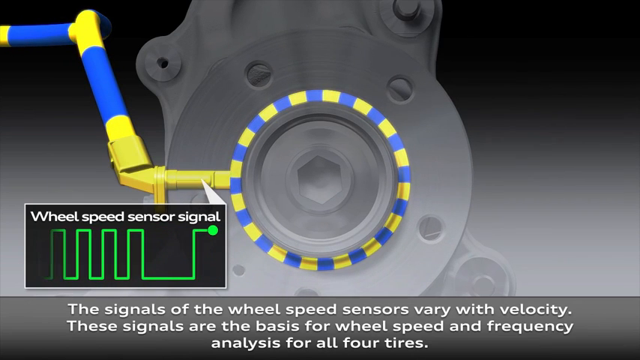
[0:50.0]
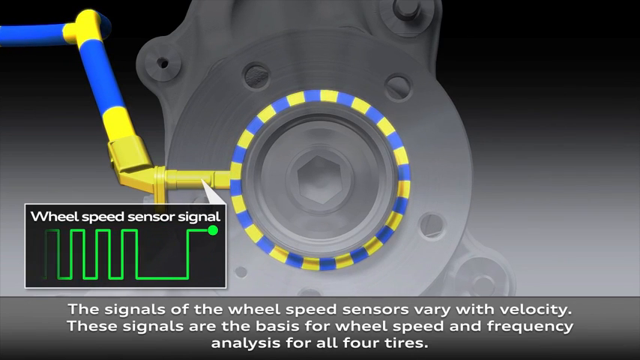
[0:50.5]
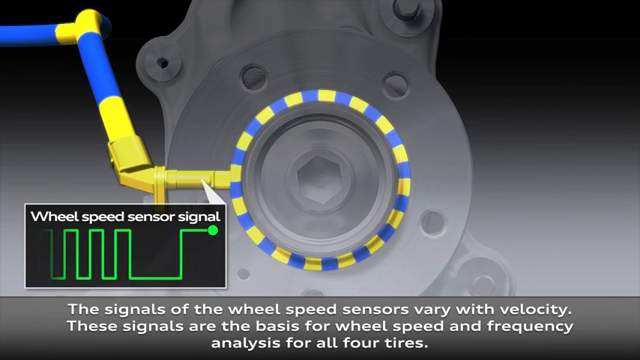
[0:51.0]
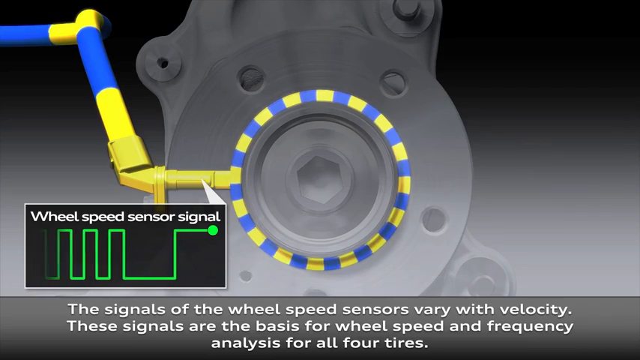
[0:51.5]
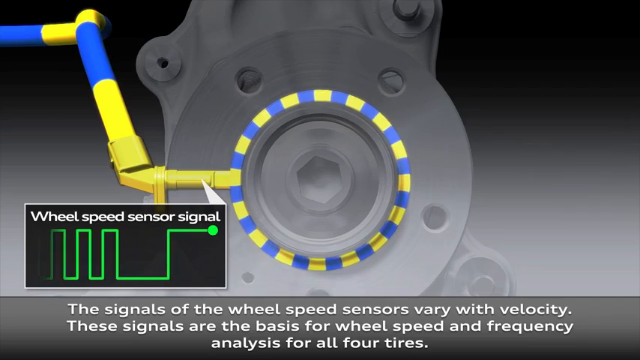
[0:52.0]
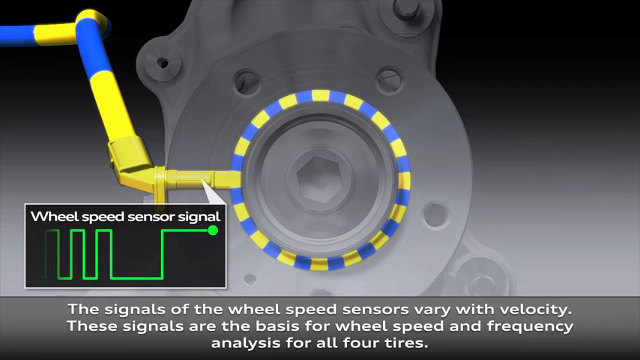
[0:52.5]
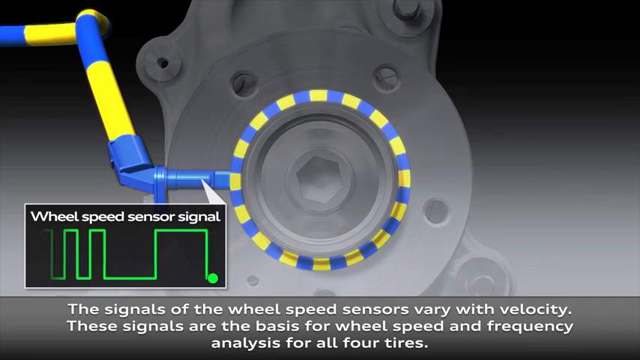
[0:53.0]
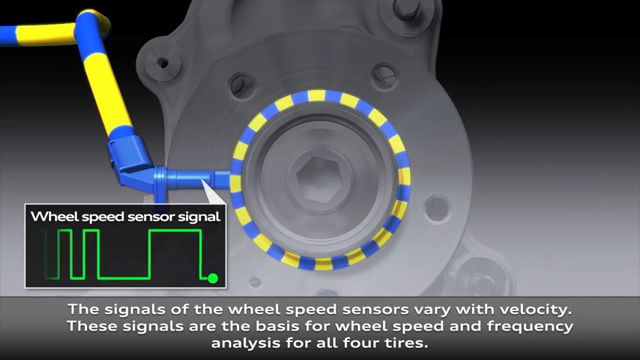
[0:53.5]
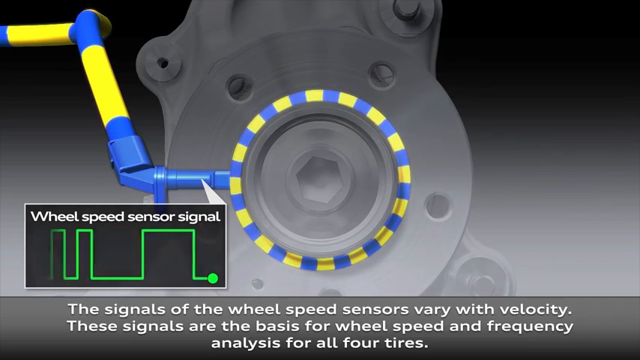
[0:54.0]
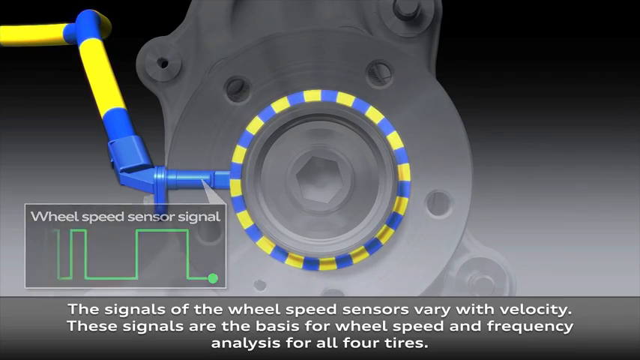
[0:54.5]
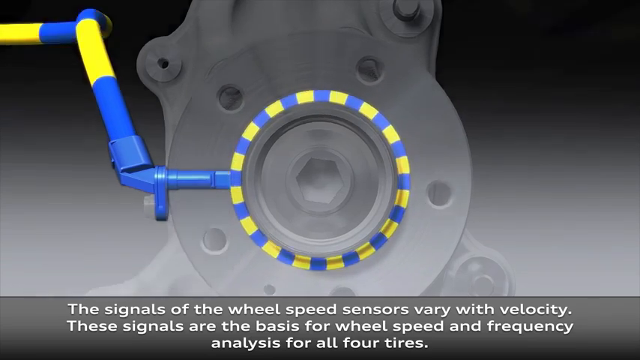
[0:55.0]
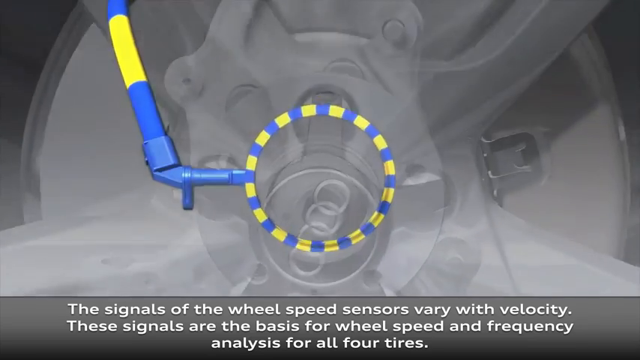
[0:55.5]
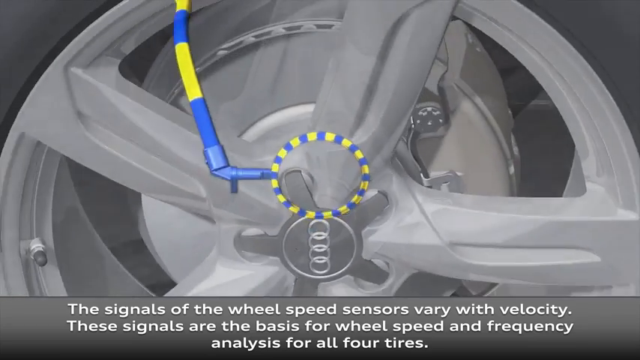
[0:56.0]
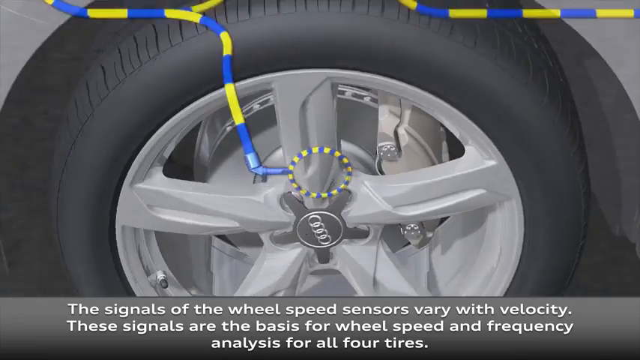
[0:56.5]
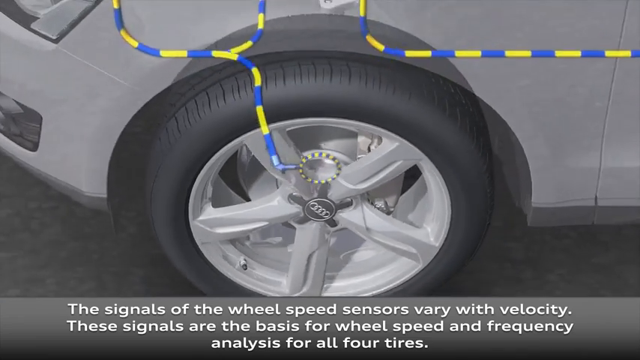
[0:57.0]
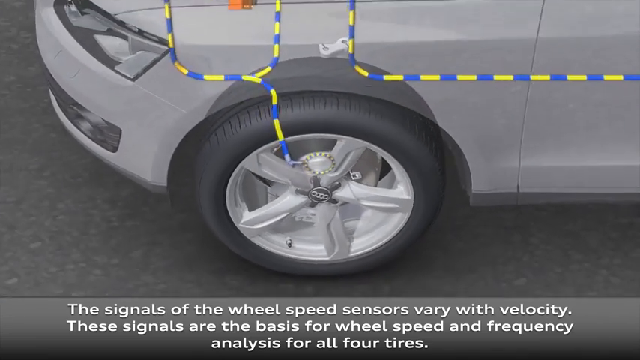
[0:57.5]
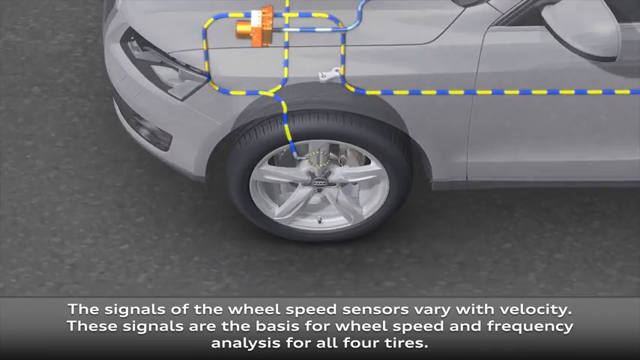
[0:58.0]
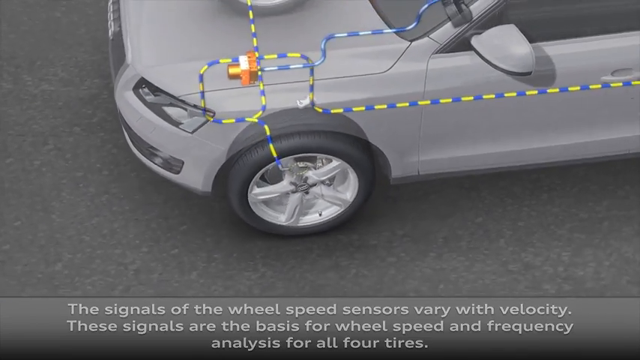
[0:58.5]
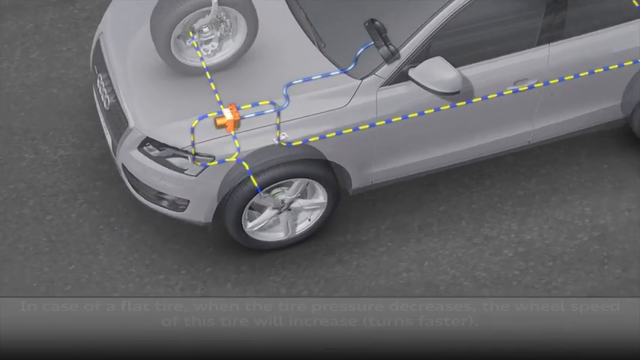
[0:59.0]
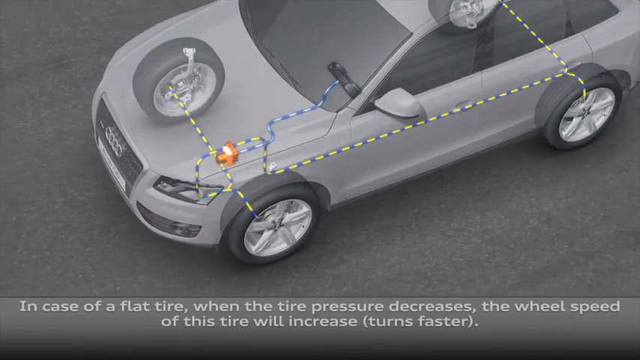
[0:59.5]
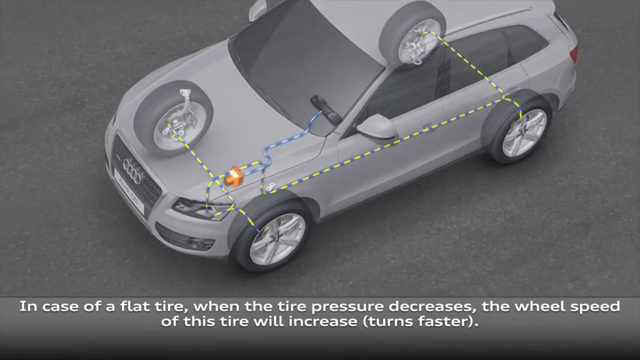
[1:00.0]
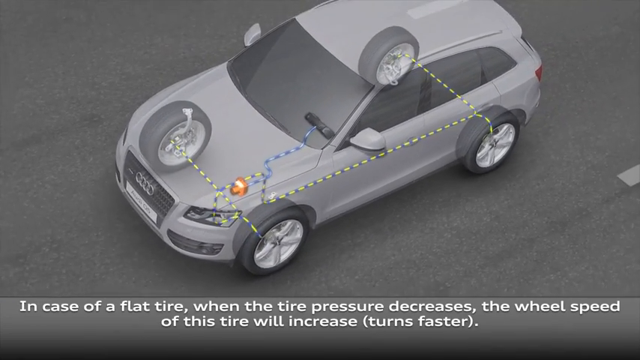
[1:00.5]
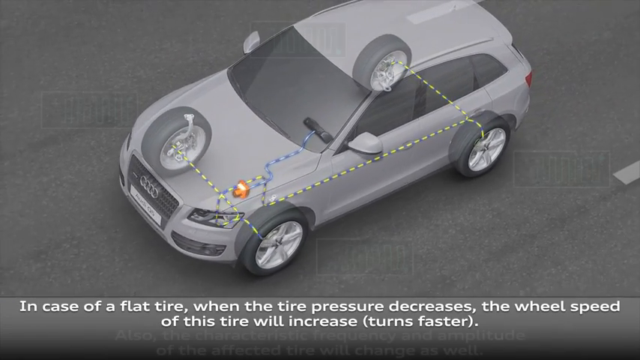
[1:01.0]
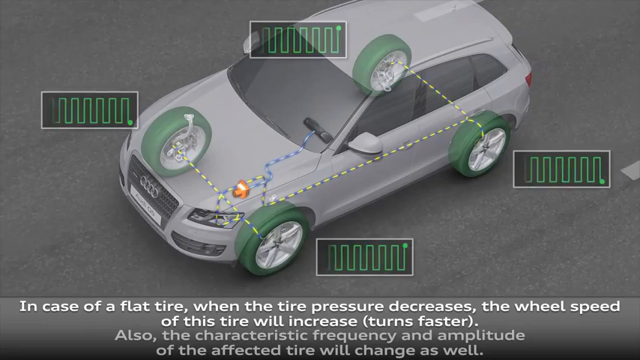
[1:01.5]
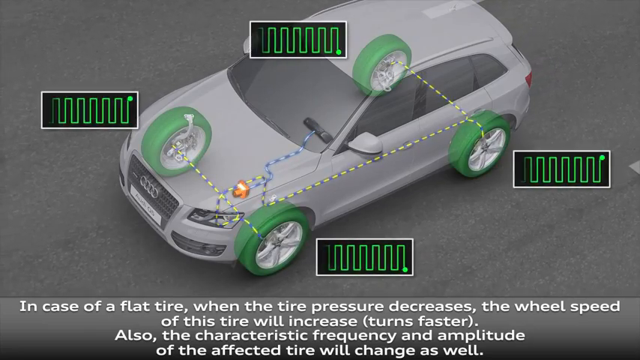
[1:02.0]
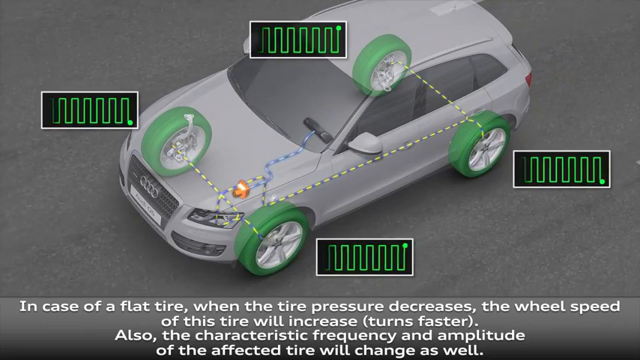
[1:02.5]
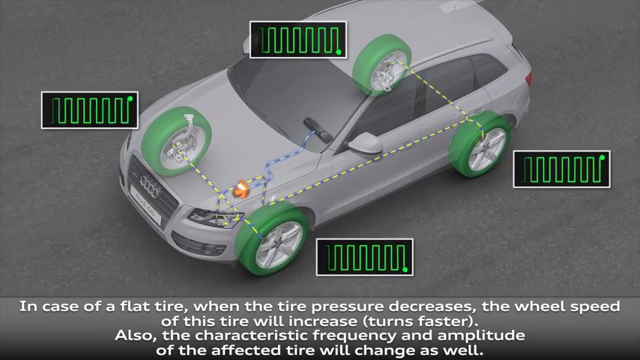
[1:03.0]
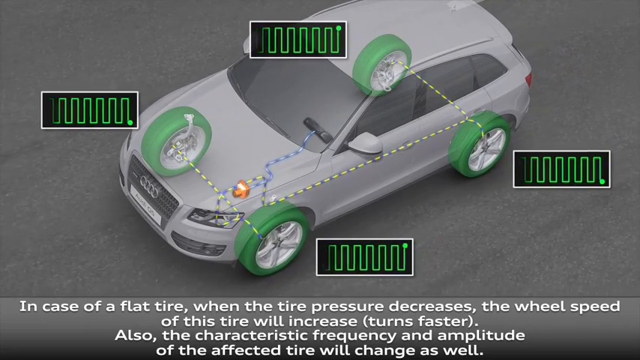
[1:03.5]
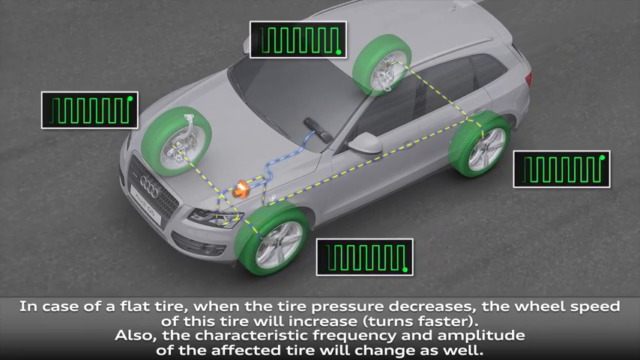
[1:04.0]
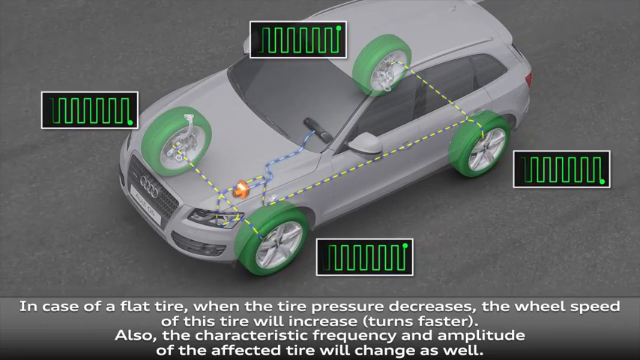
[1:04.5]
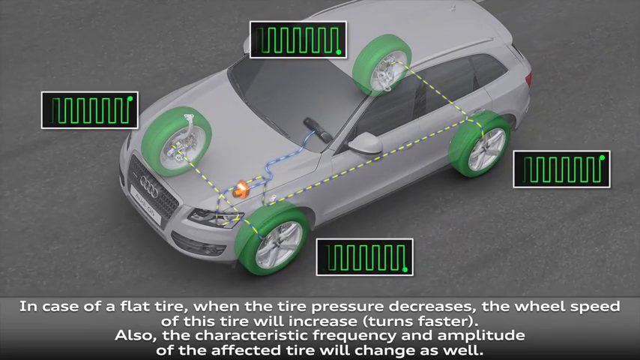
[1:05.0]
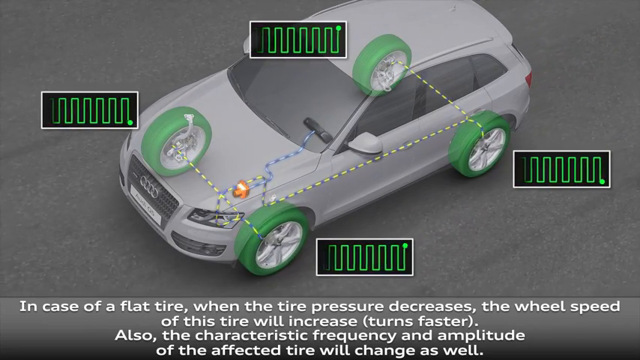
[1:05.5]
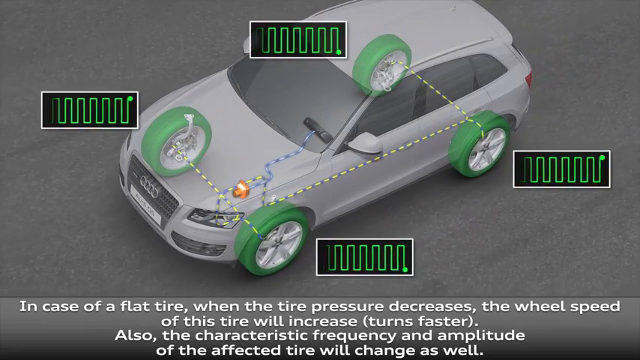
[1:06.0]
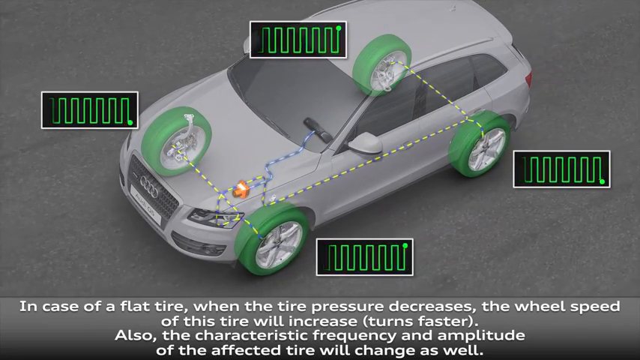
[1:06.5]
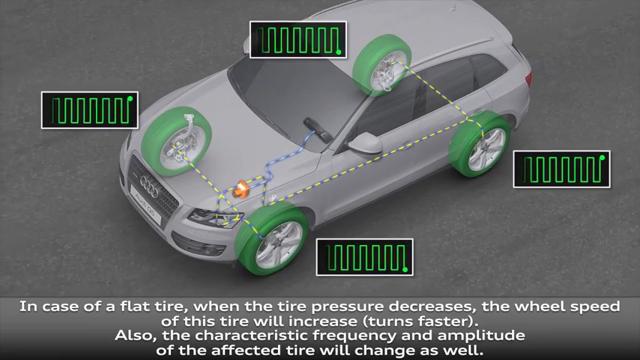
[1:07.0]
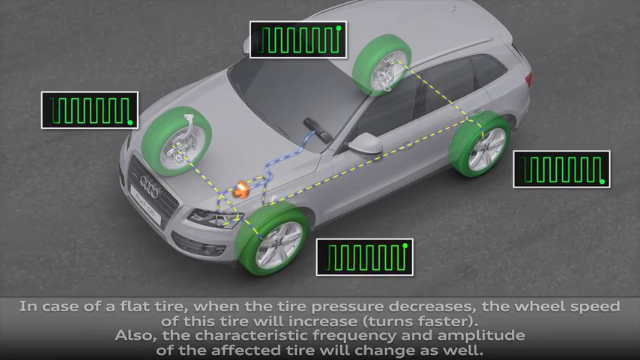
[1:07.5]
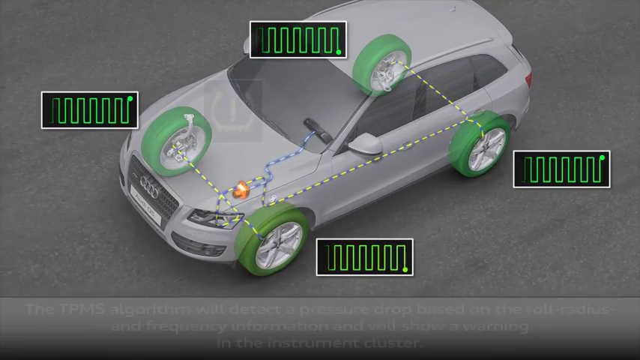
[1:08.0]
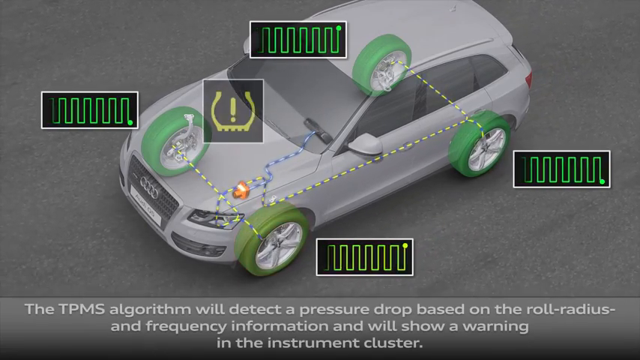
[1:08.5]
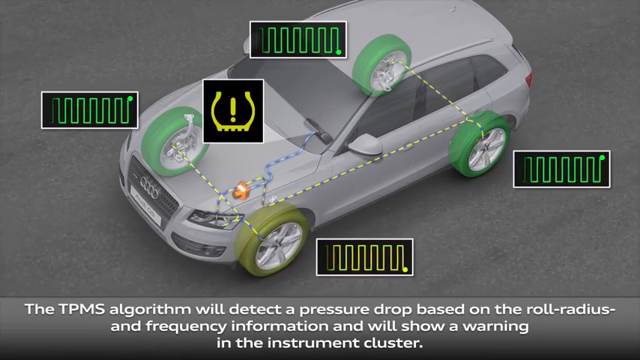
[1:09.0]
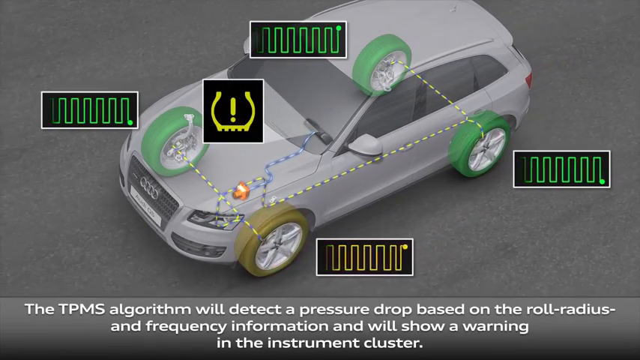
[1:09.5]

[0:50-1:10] The indicator on the left disappears and the view zooms out to show the tire and the car. The text at the bottom changes to read: "The signals of the wheel speed sensors vary with velocity. These signals are the basis for wheel speed and frequency analysis for all four tires." All four tires are shown as part of the system, connected together. The view zooms out further, showing all the tires connected through a very big, long blue and yellow tube. The two front tires are connected together, the back tires are connected together, and a tube connects the back left and front left tires on the driver's side. A tube runs down from the right side to the left side, and all the tubes connect to some sort of system in front of the car. Four different indicators monitoring the tire pressure appear, followed by a warning symbol that is an exclamation point.